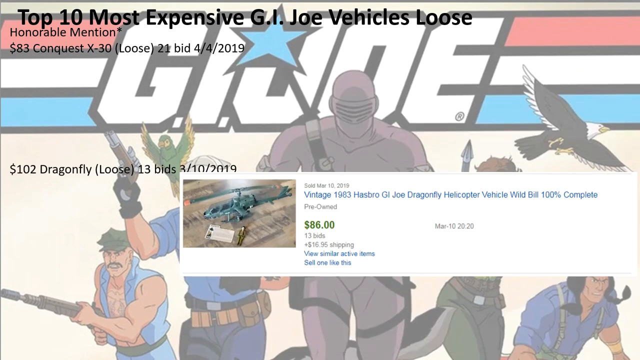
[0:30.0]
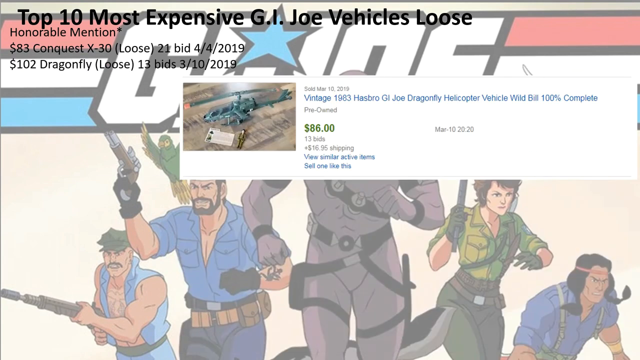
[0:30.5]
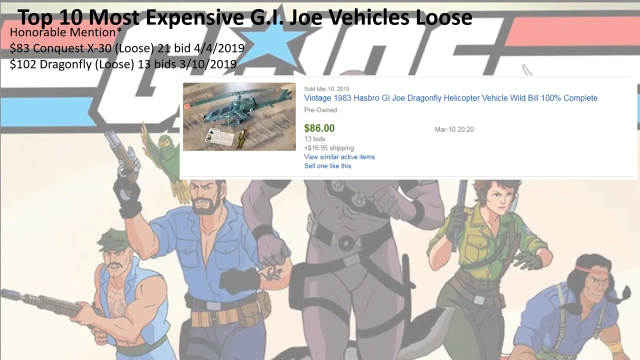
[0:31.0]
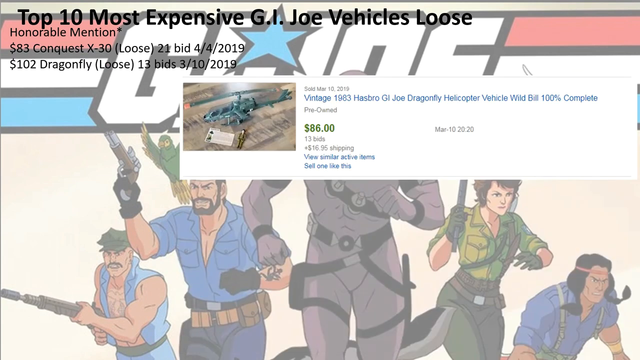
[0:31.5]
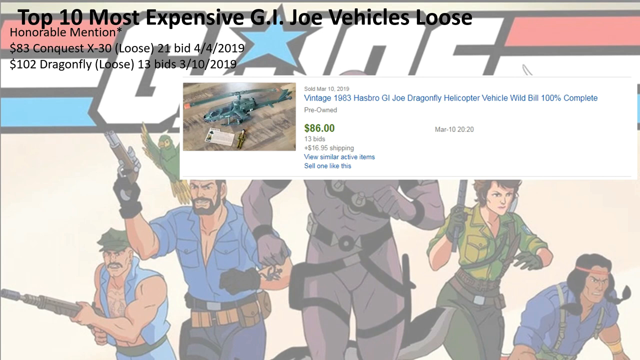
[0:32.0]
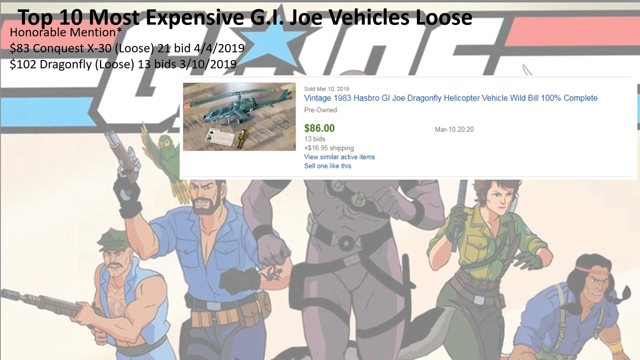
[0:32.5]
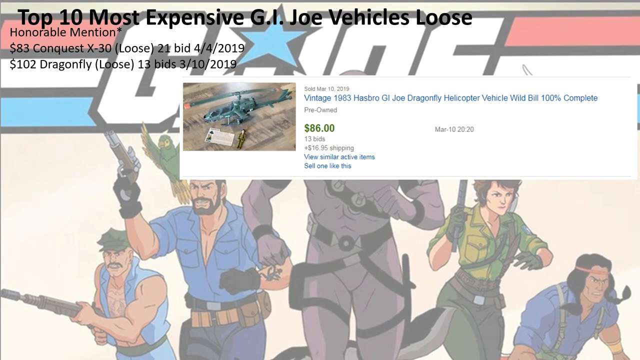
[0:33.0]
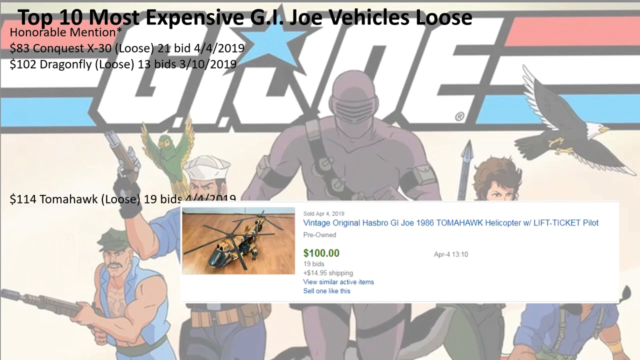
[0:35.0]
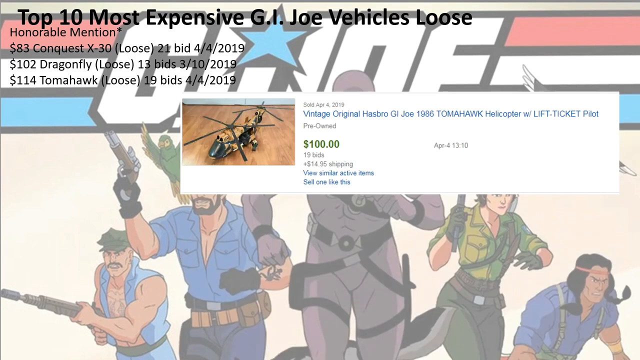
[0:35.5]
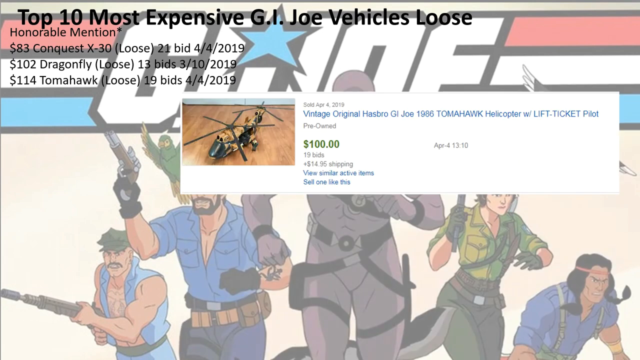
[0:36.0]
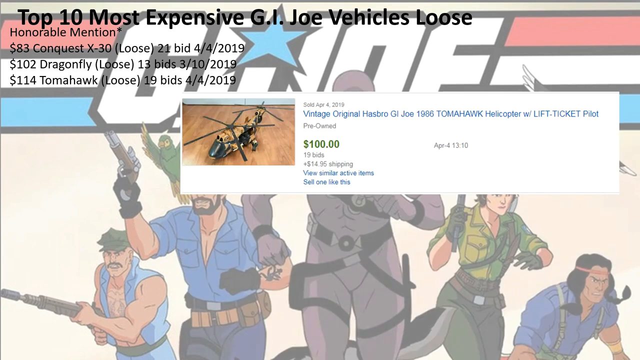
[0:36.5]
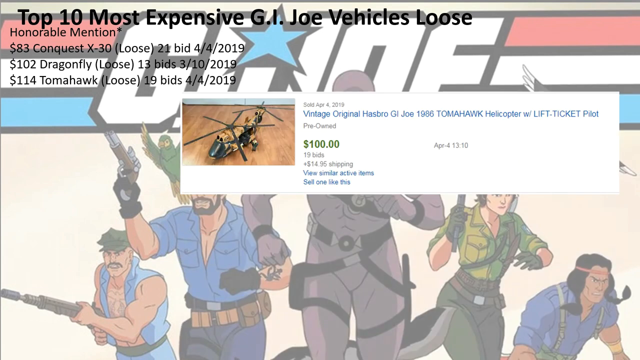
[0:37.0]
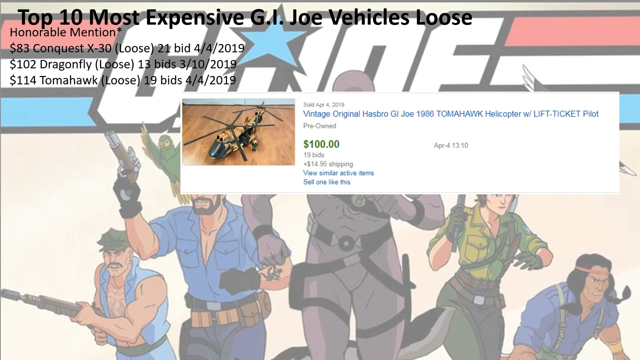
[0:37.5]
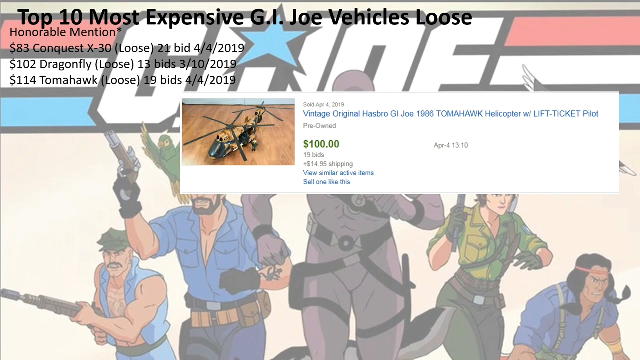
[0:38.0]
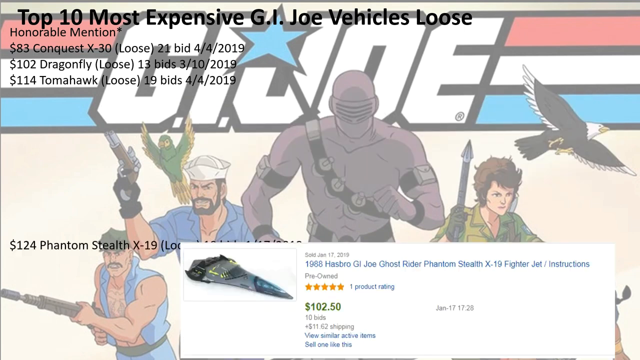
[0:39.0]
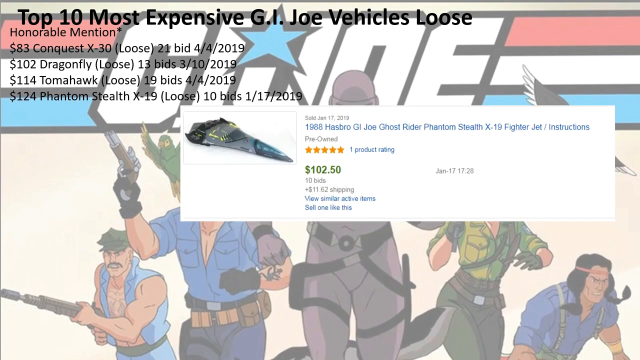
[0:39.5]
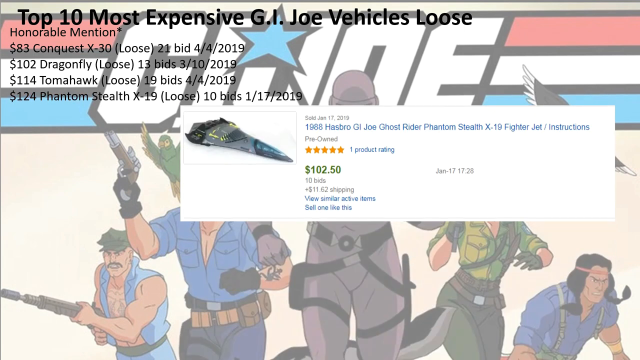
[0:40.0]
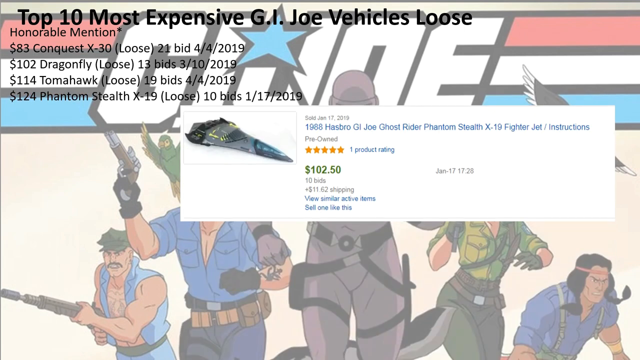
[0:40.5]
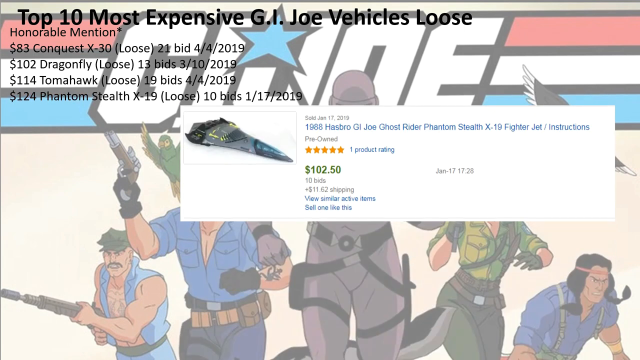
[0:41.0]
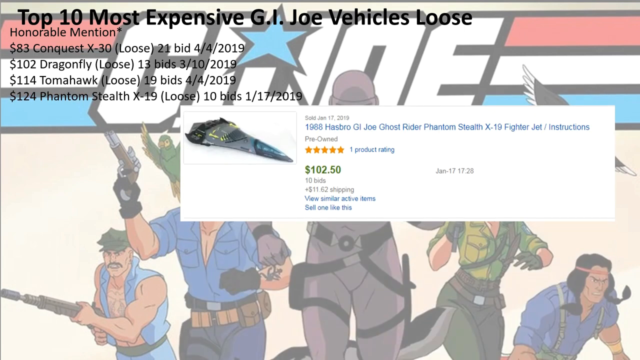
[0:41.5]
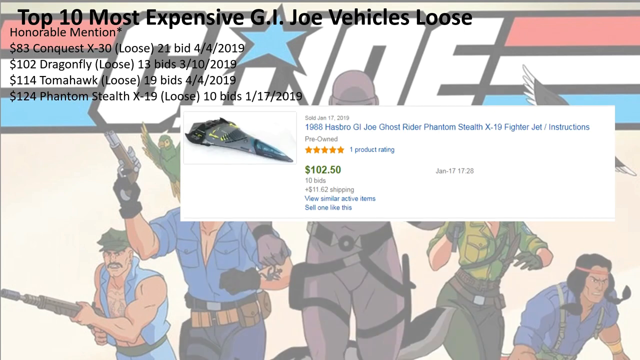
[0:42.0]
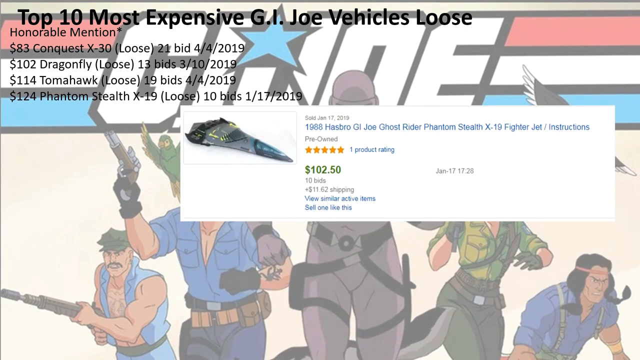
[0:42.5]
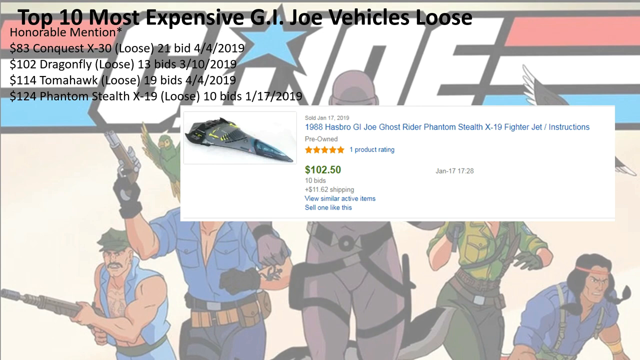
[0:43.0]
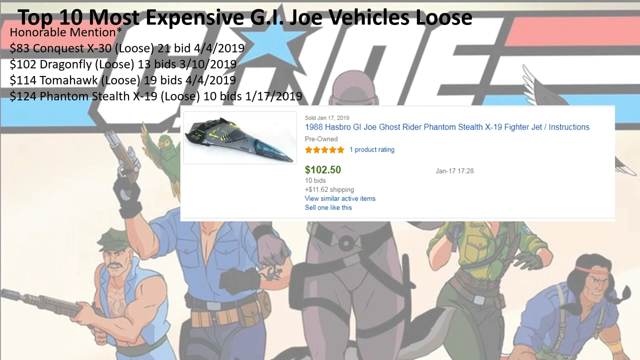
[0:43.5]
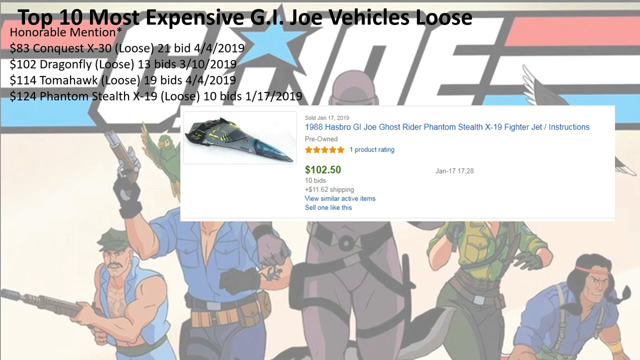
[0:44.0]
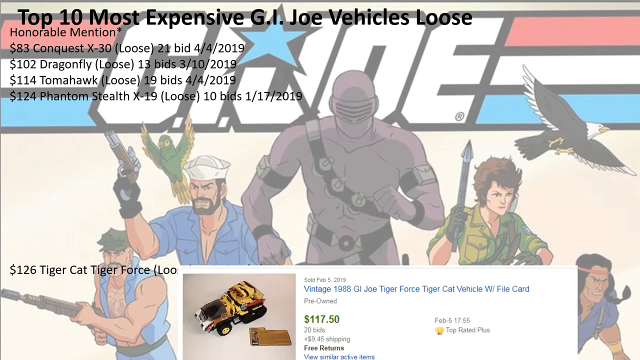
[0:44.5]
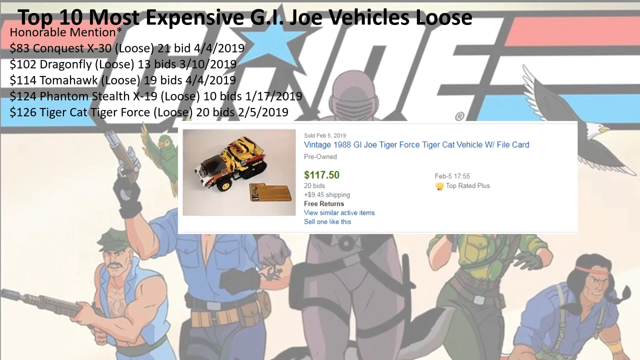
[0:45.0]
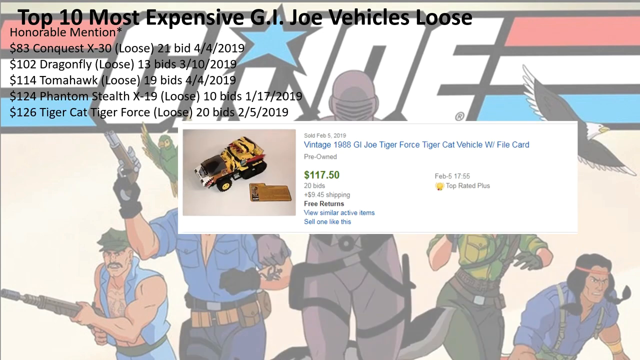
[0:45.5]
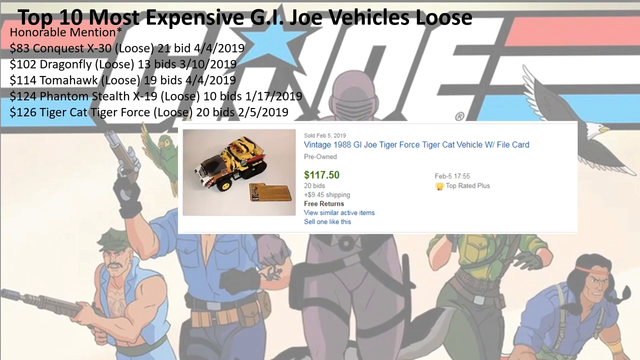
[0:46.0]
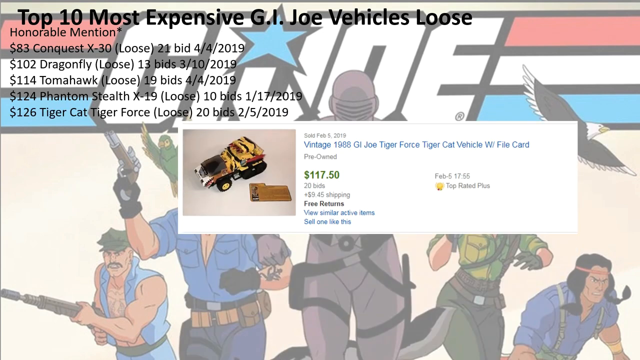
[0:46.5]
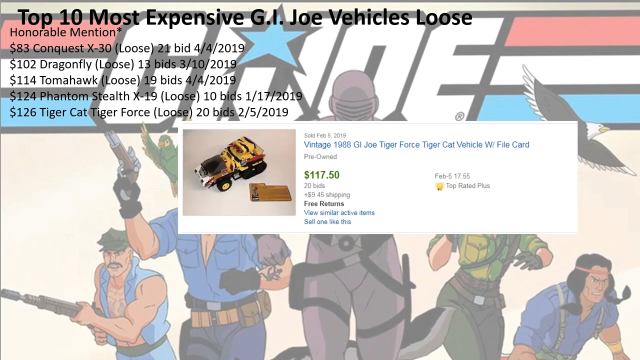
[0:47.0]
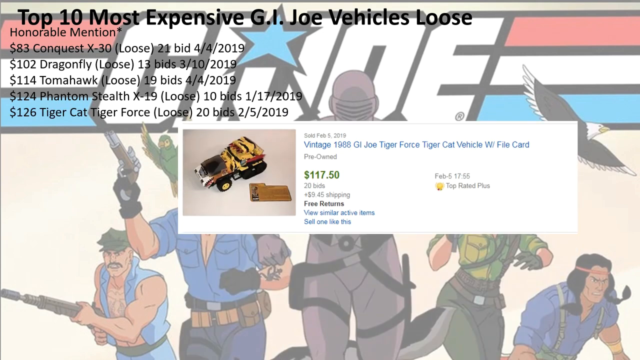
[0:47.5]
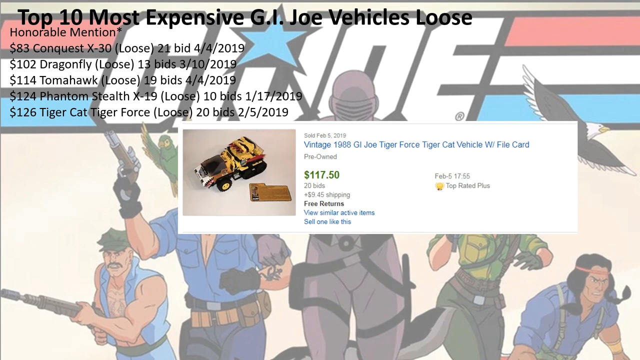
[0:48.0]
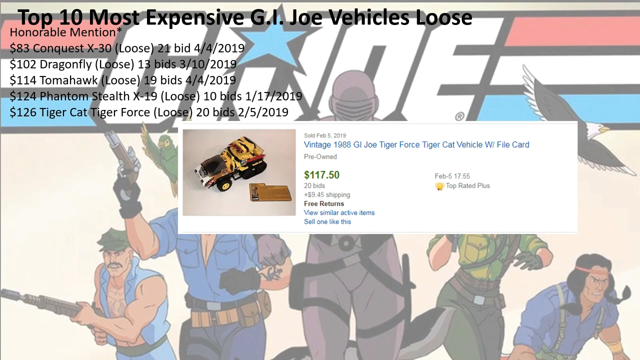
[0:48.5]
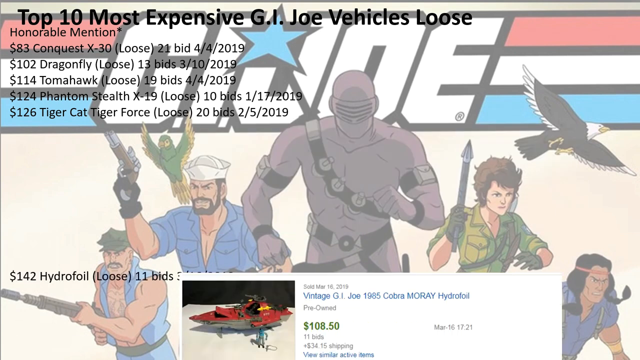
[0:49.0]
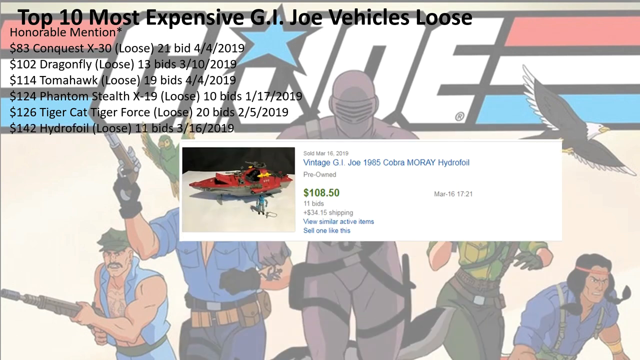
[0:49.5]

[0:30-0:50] Another listing appears, for a vintage 1983 Hasbro G.I. Joe Dragonfly helicopter, 100% complete. It went for $86 with 13 bids, plus $17 for shipping, dated March 10, 2019, for a total of $102. Next comes a vehicle called Tomahawk, from April 4, 2019, for $114, of which $100 is the price and around $14-$15 the shipping; the listing reads "vintage original Hasbro GIJOE 1986 Tomahawk Helicopter with lift ticket pilot" and is marked pre-owned. Another listing follows for a 1988 Hasbro G.I. Joe Ghost Rider Phantom Stealth X-19 fighter jet at $124, with $102.50 as the item price and the rest shipping. Then comes the Tiger Cat from Tiger Force for $126, from 1988, sold on February 5, 2019, with the vehicle itself at $117.50 and $126 as the total with shipping.